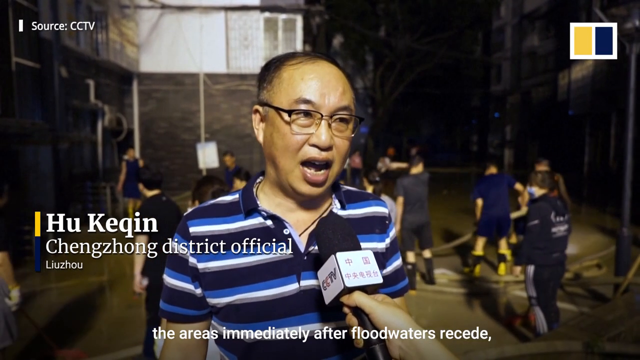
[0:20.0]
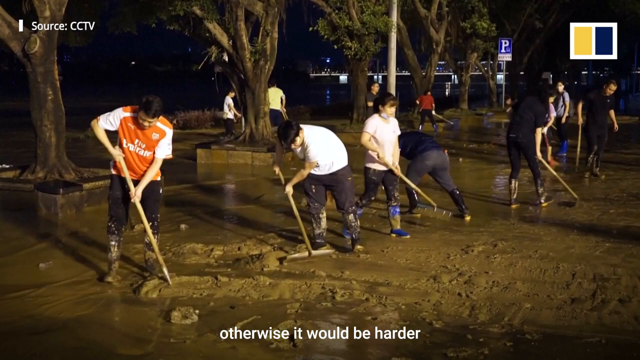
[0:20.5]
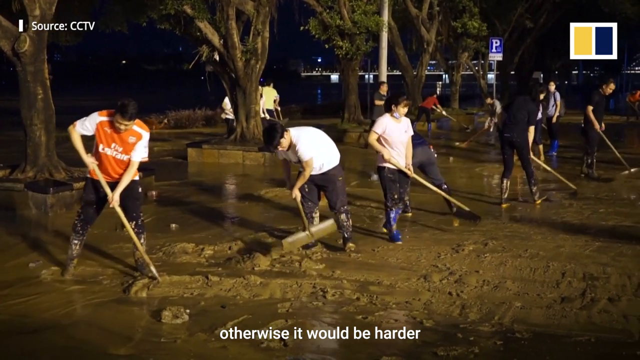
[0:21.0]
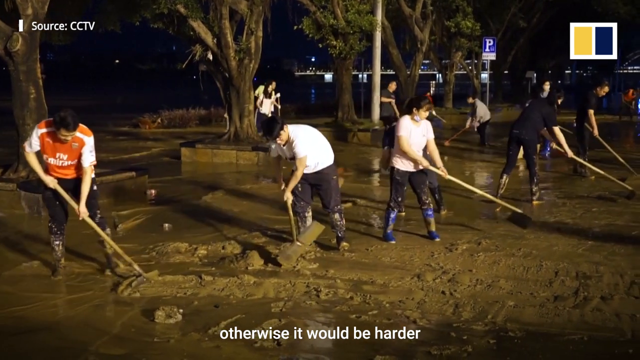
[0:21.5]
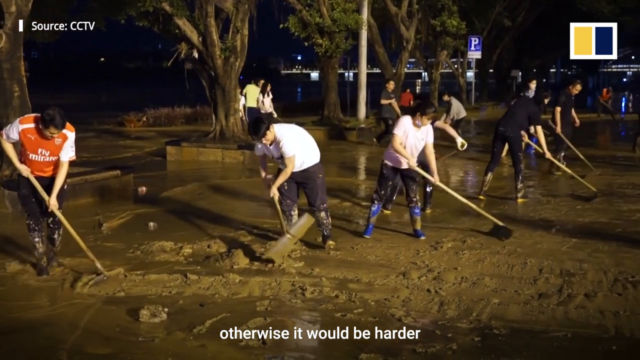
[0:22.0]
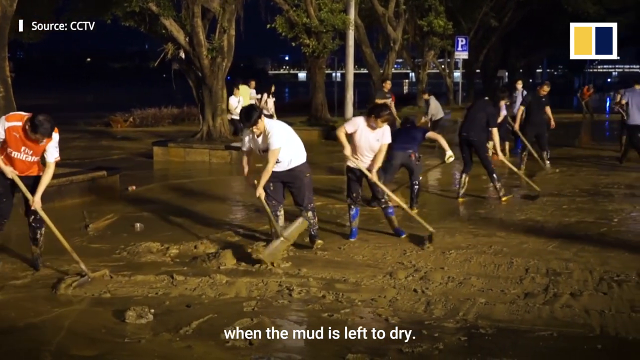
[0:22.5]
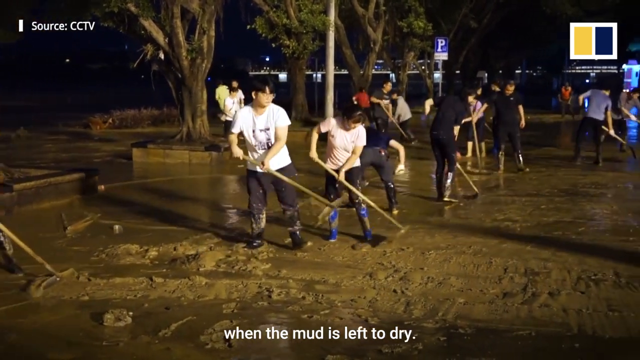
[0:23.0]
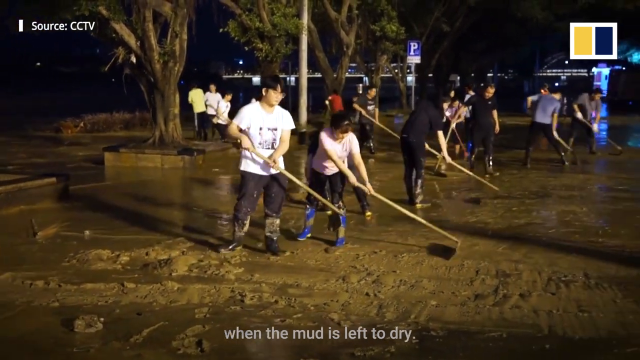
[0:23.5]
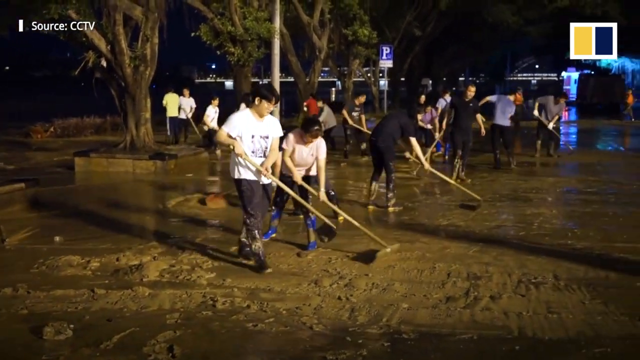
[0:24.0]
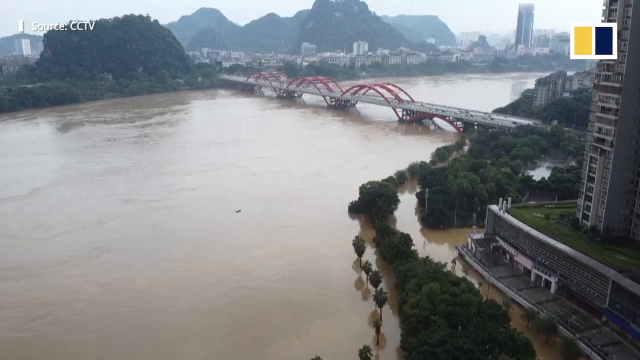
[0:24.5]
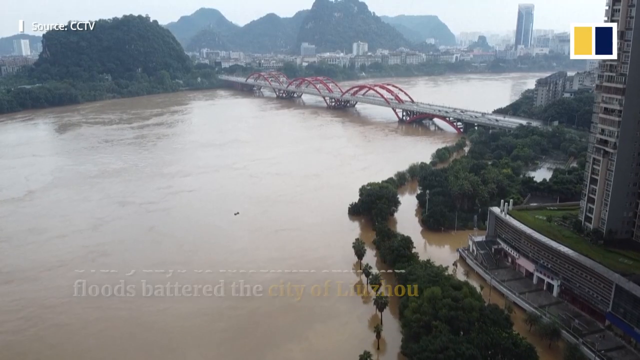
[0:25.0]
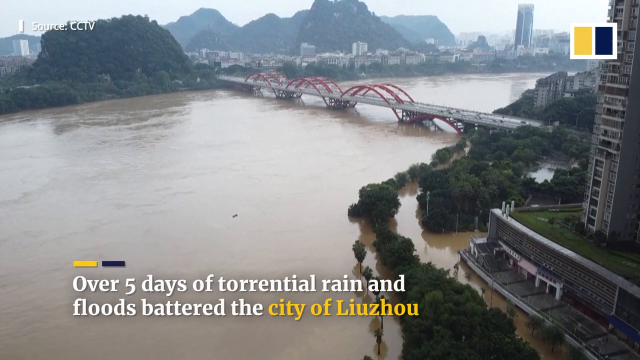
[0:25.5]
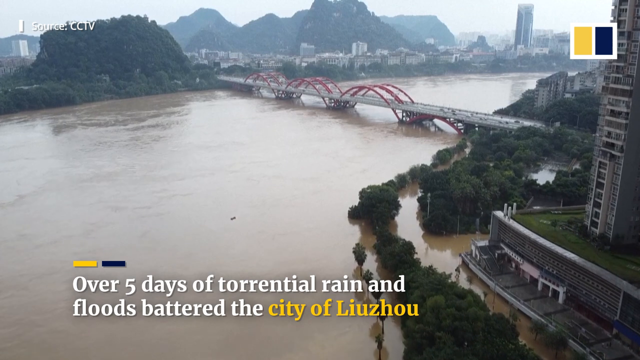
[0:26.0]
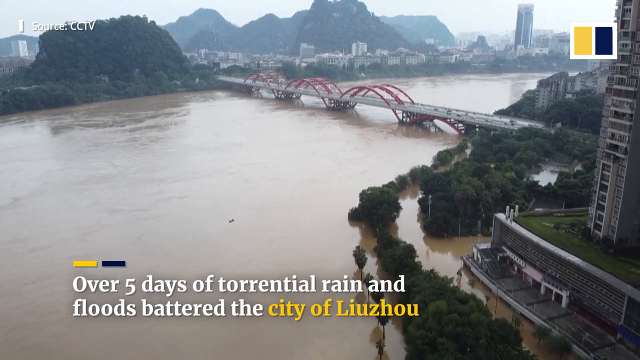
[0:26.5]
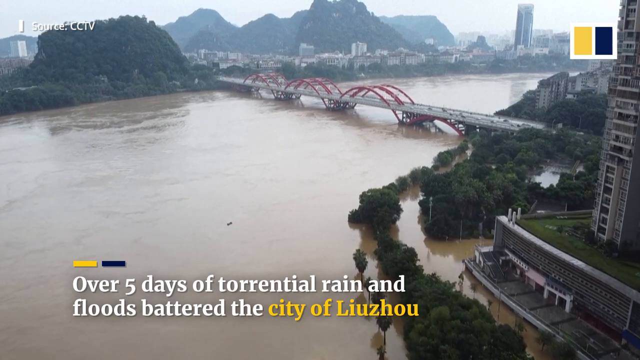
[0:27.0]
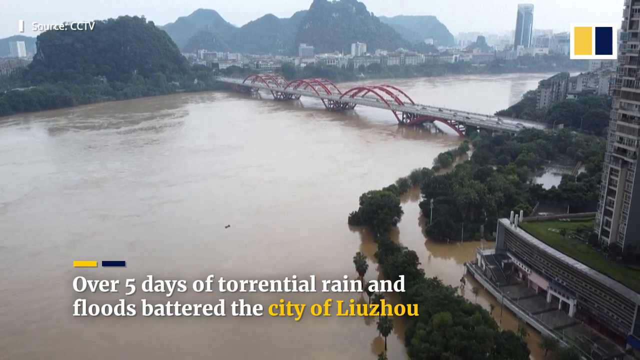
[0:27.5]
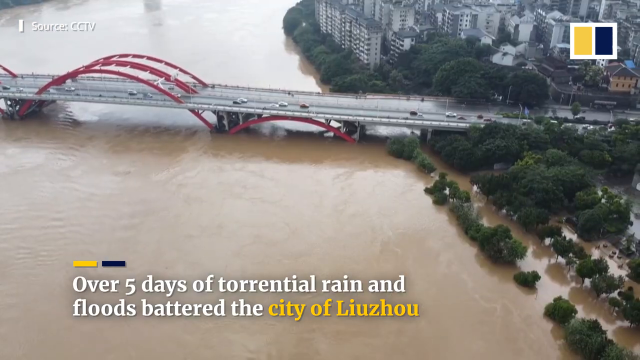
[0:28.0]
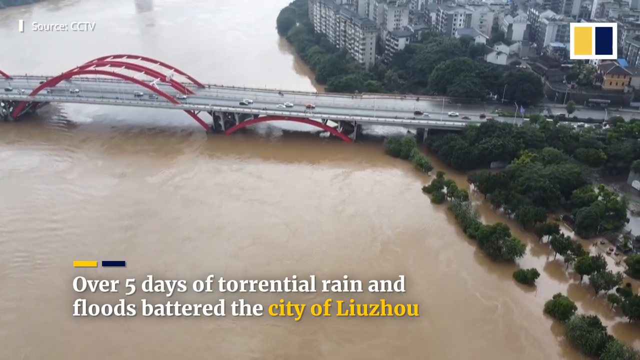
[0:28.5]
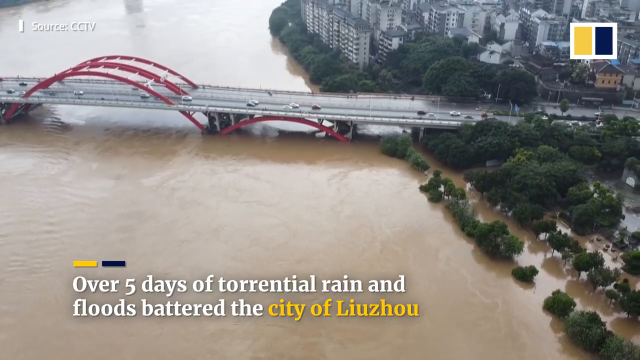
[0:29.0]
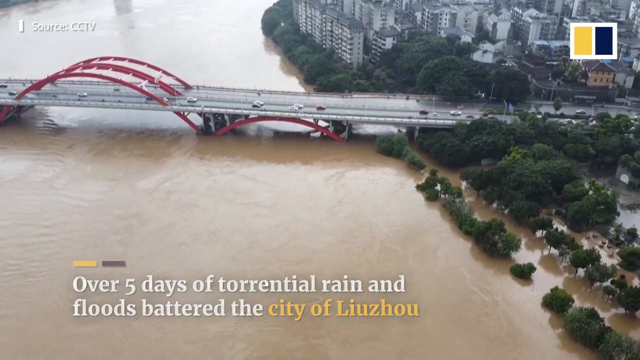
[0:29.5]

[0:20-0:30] A man is shown talking about the flood. The scene switches to about ten people raking mud, apparently outside. Then an aerial shot comes in toward a large bridge over a river whose water looks muddy and brownish. Mountains are in the background, the day looks kind of overcast, and there are buildings to the right in the foreground. Text at the bottom reads "over five days of torrential rain and floods battered the city of Liuzhou", and the water levels appear high. The text at the bottom then reads "otherwise it would be bad if the mud was left out to dry". The overhead view of the bridge and the muddy water returns, and as it pans over, more buildings come into view and cars are seen moving over the bridge. The bridge is shown from two angles, the second showing more of the buildings from overhead and the cars moving.